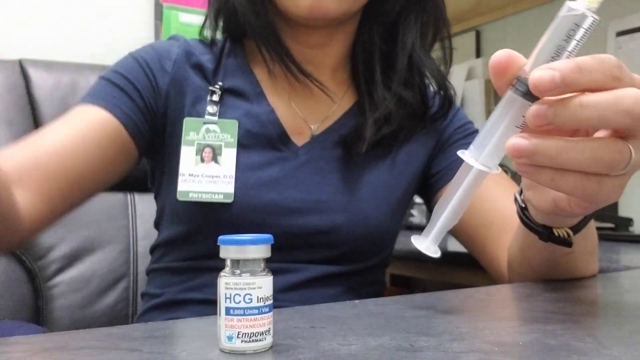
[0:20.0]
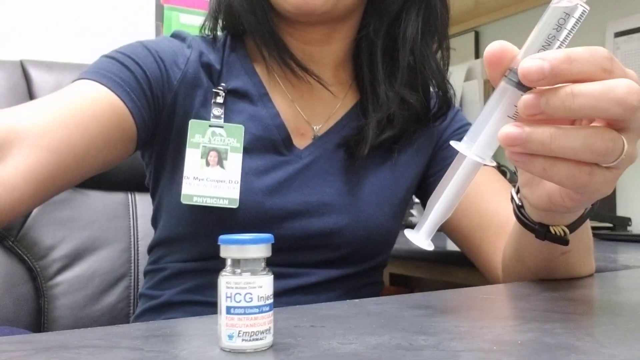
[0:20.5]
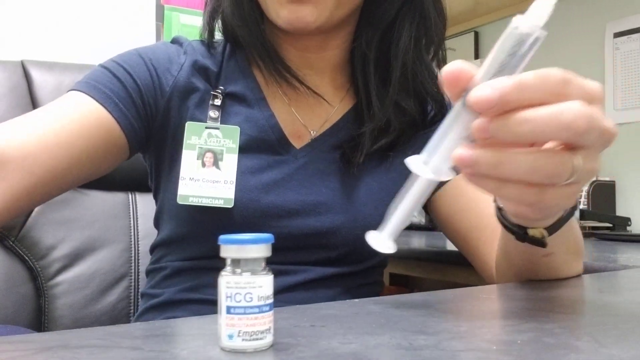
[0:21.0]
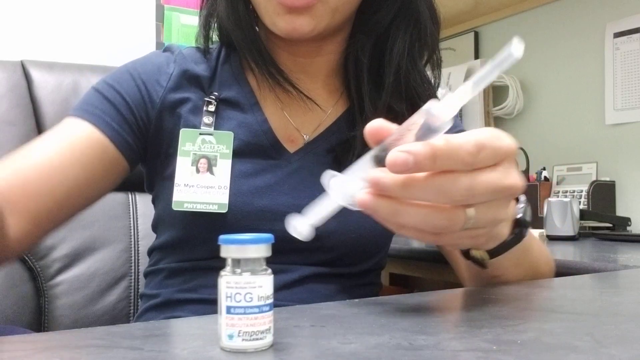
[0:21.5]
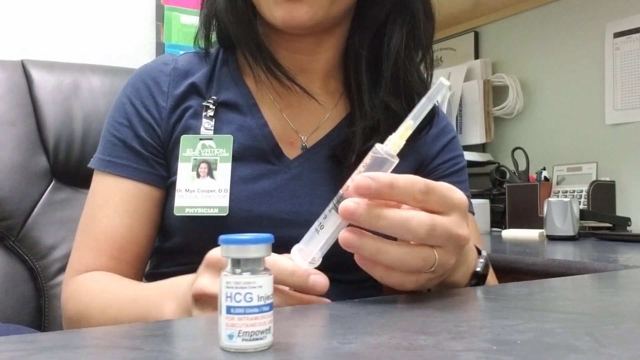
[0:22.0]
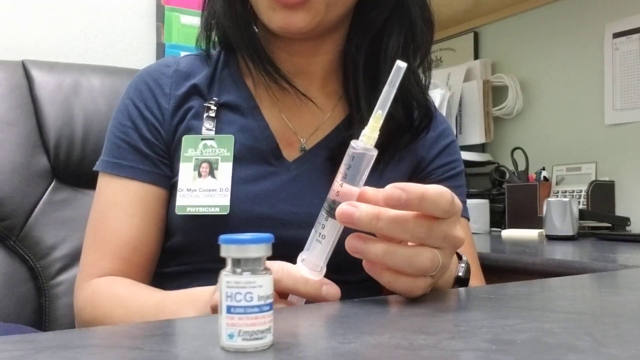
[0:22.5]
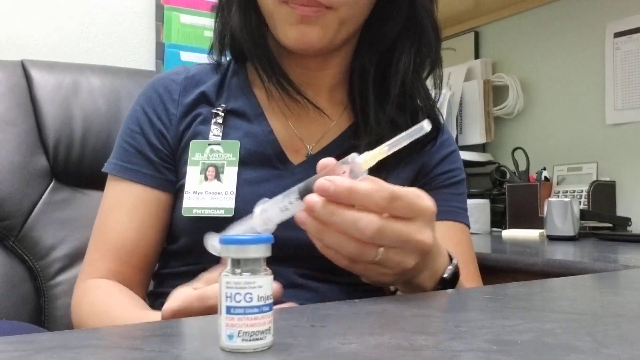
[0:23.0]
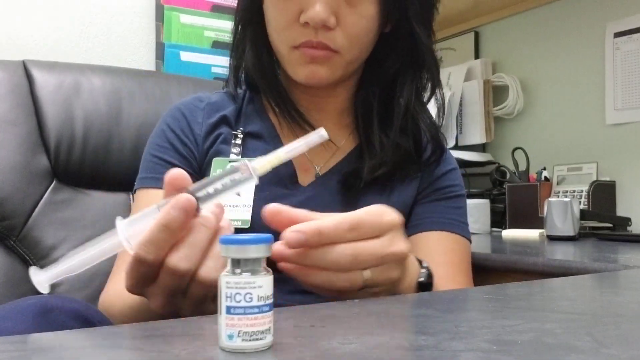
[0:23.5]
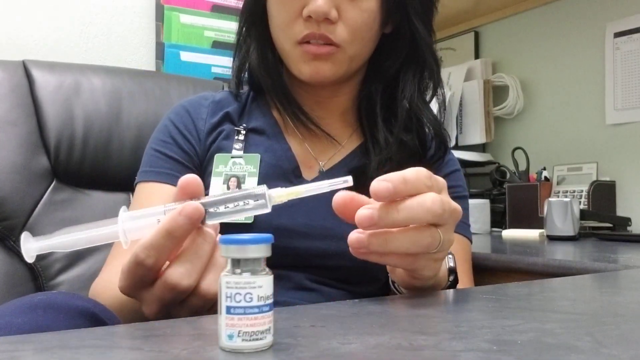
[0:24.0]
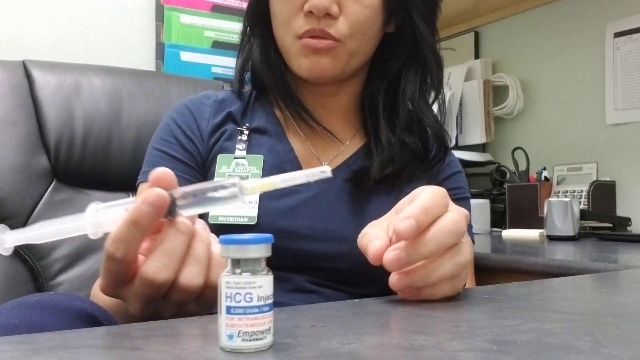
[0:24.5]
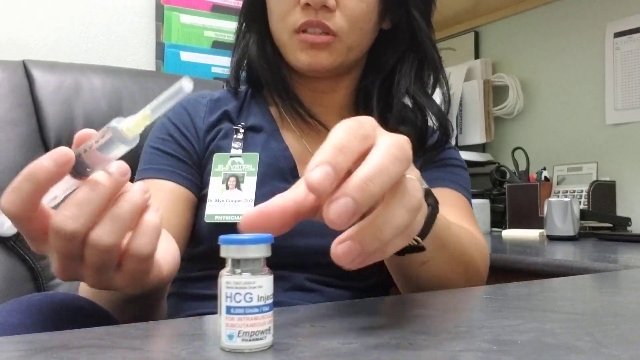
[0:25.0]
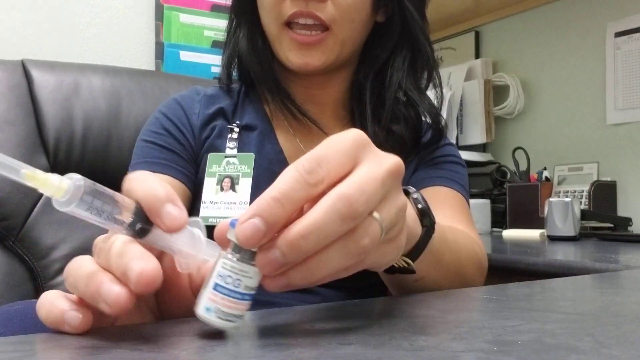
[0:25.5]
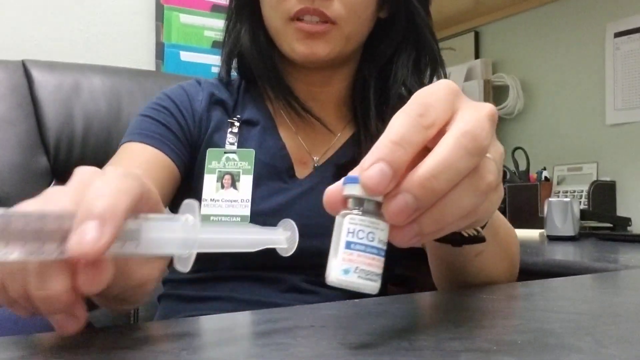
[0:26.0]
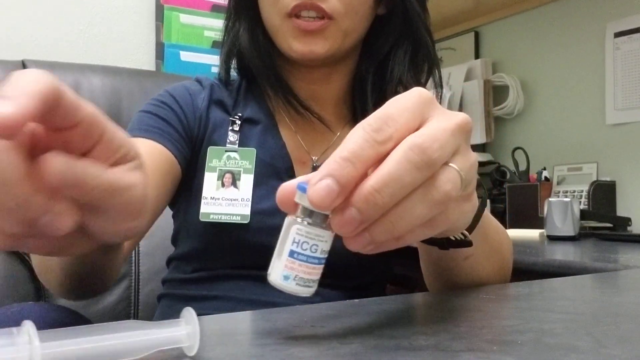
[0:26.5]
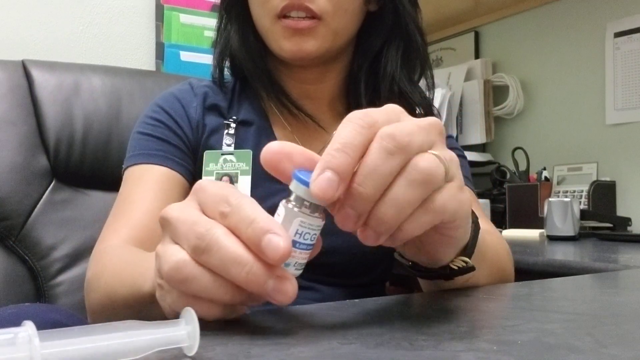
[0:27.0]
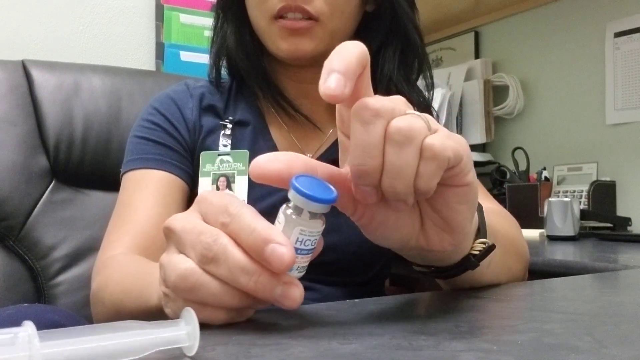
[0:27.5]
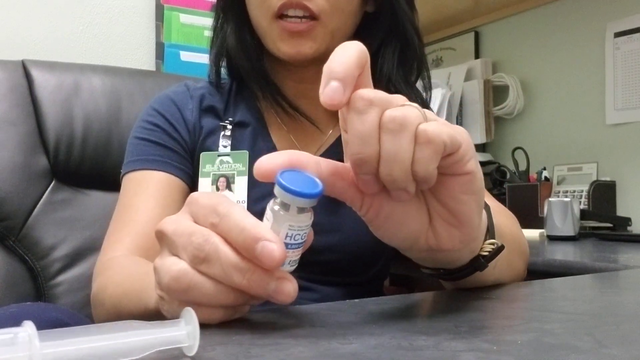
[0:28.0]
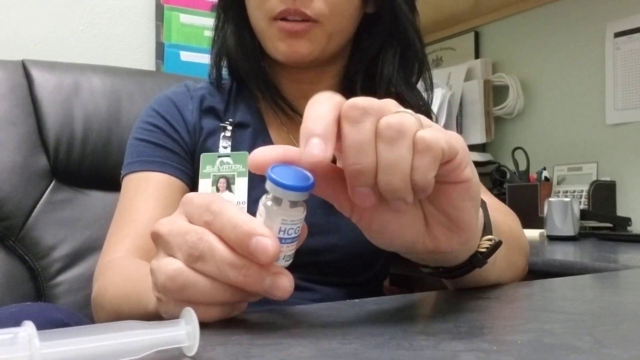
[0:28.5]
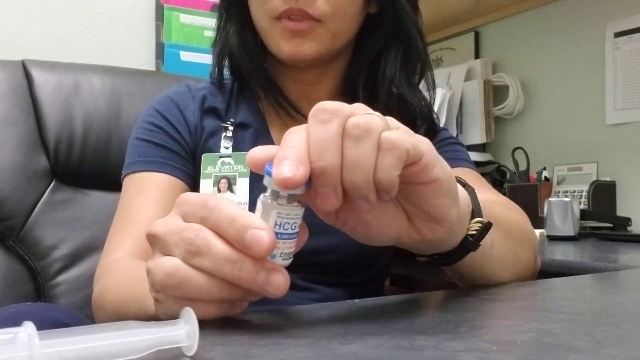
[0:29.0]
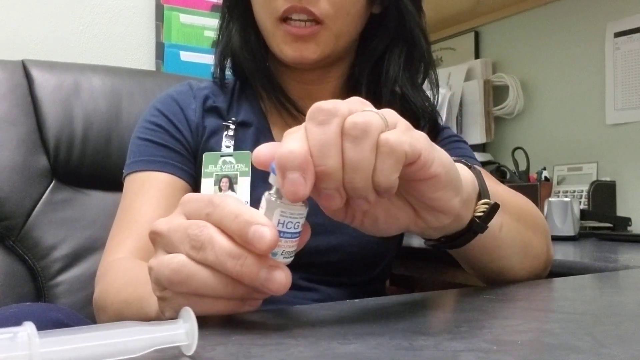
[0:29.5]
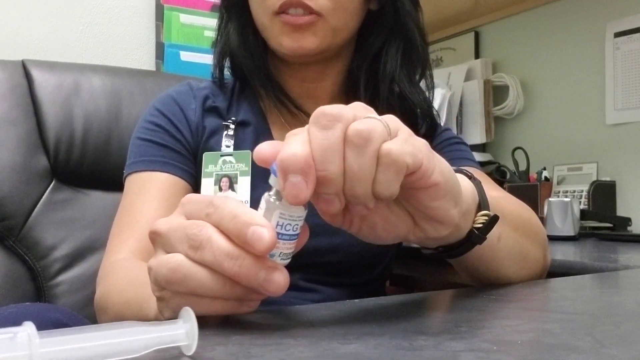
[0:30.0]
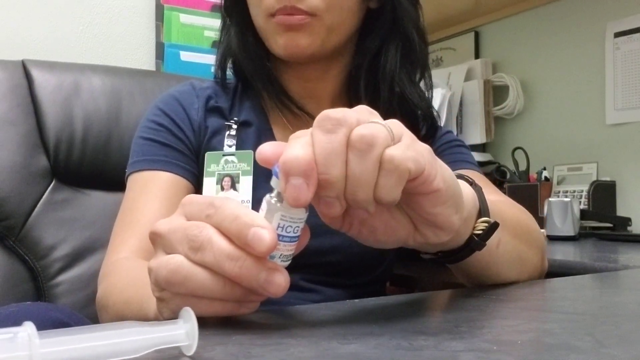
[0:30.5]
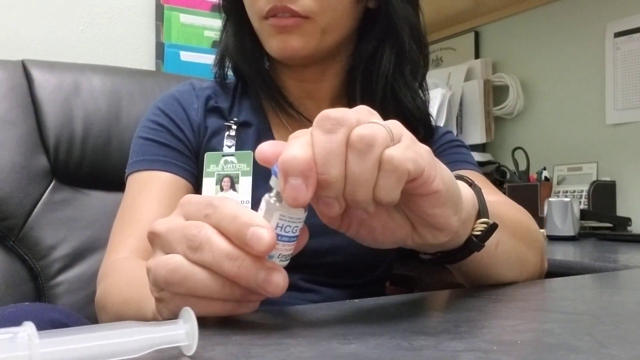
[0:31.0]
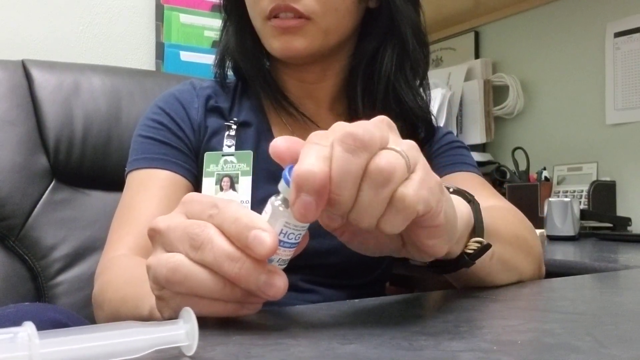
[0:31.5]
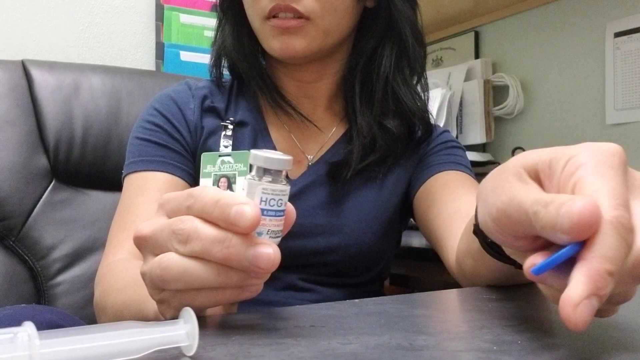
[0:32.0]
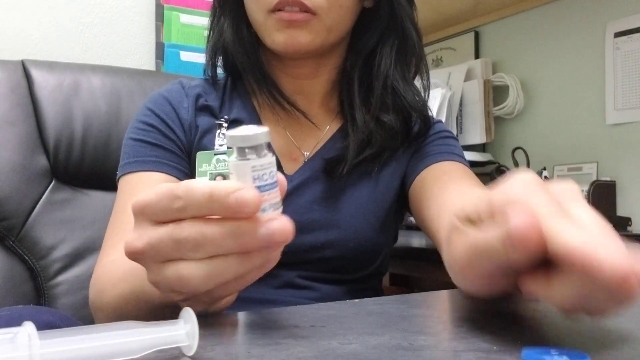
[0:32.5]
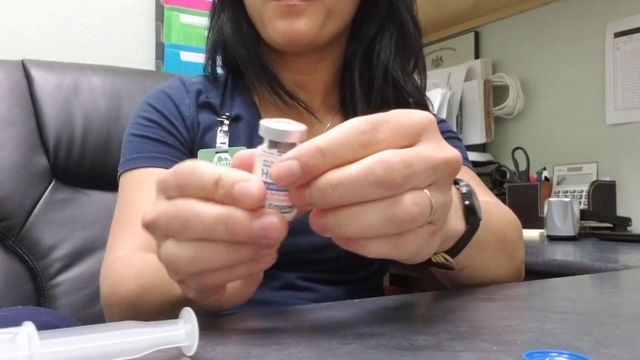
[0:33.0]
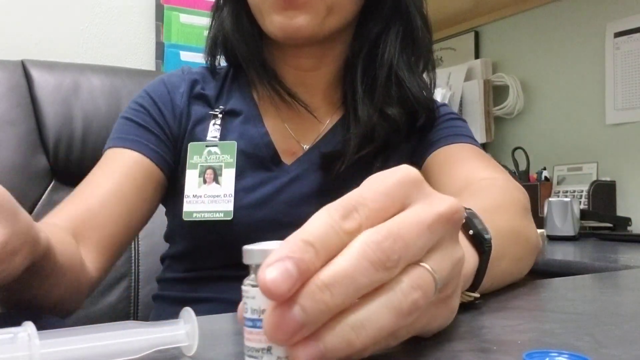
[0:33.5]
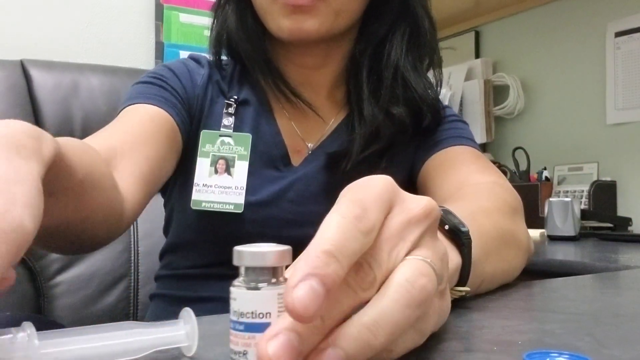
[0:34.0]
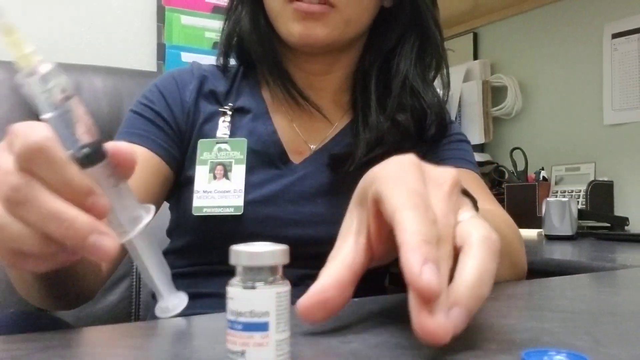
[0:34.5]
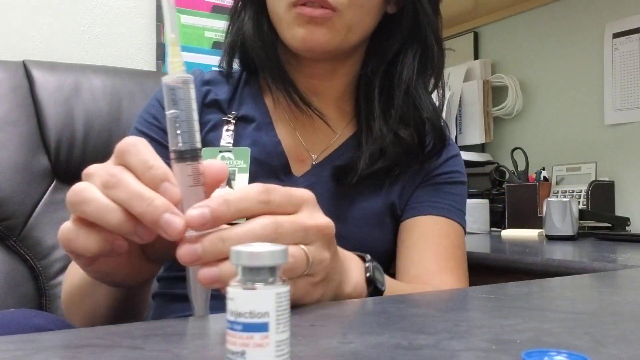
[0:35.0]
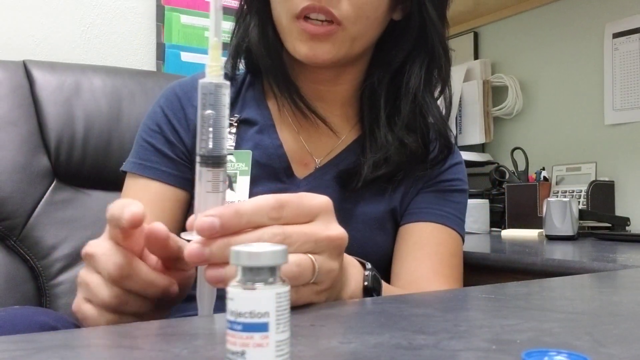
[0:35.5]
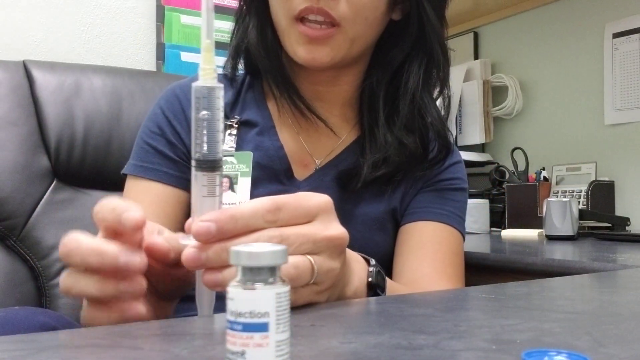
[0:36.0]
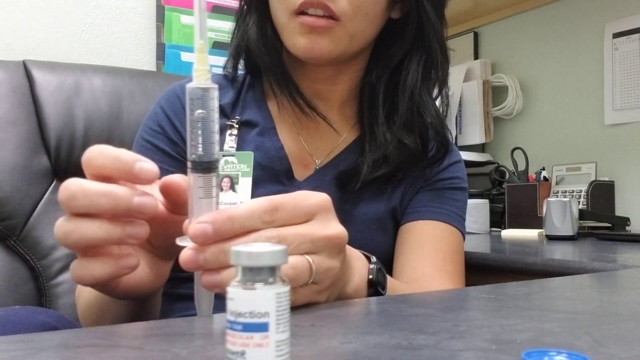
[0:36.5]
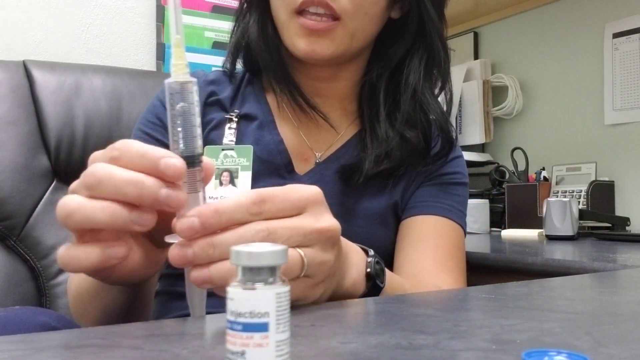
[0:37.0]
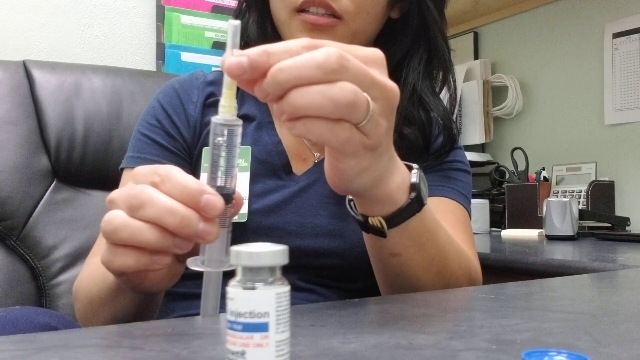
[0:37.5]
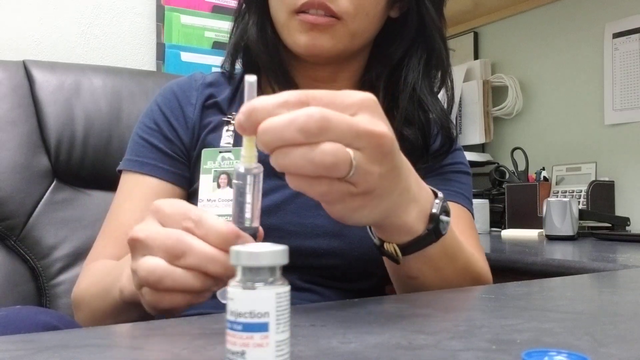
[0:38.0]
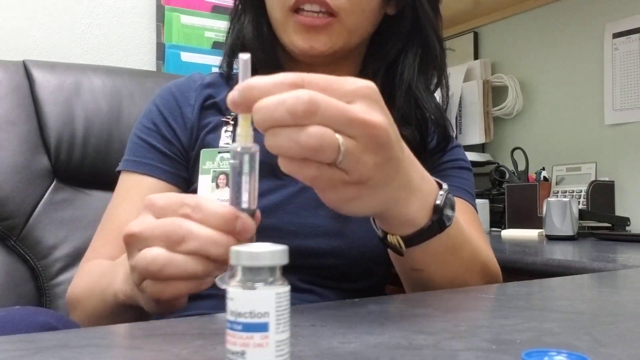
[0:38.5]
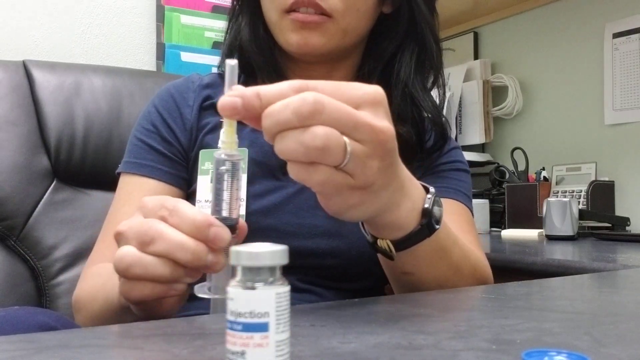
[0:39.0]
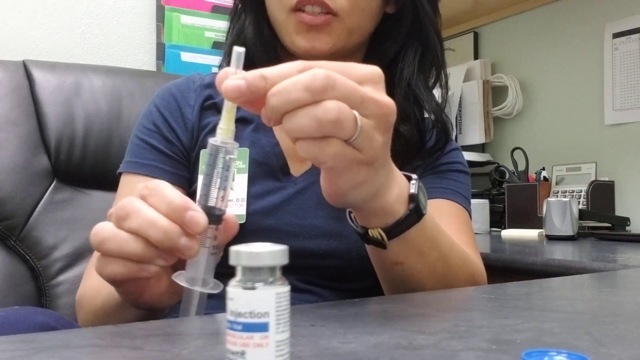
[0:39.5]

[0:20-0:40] An employee in a medical office wears navy scrubs with an ID tag clipped to her right shoulder. In her left hand she holds a plastic injector, and in front of her is a small bottle, the size of a pill bottle, with a blue and white cap and the words "HCG injector" on it. Her face is not visible at first. As she displays the injector, she picks up the bottle and takes off an outer lid; "HCG injector" is visible on the bottle. She then shows different levels on the plastic injector and moves to take the plastic cap off its tip. The injector is about 8 to 10 inches long and about 1 to 2 inches wide, made of clear plastic, and looks lightweight.